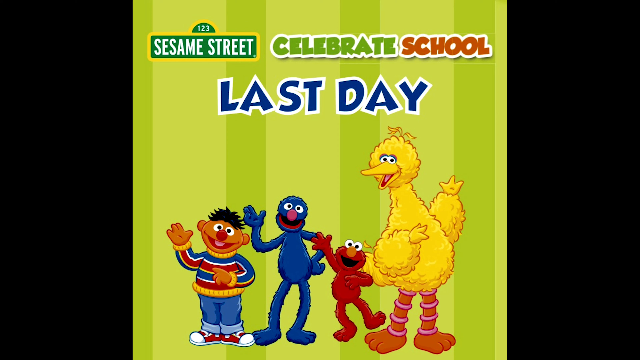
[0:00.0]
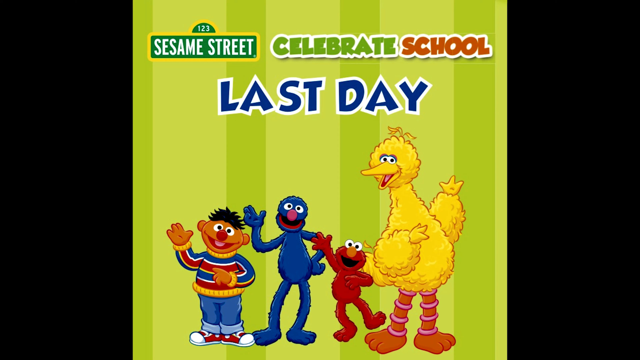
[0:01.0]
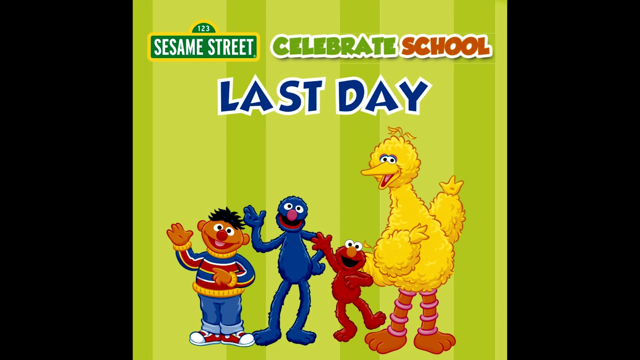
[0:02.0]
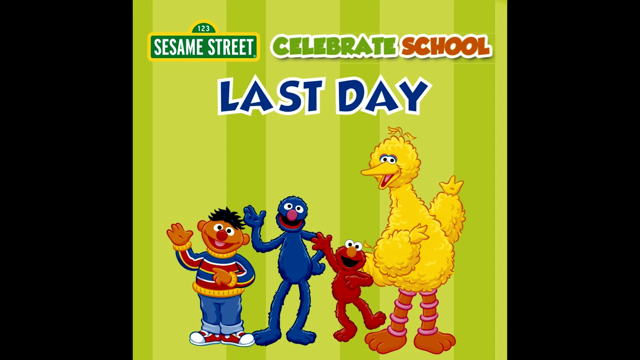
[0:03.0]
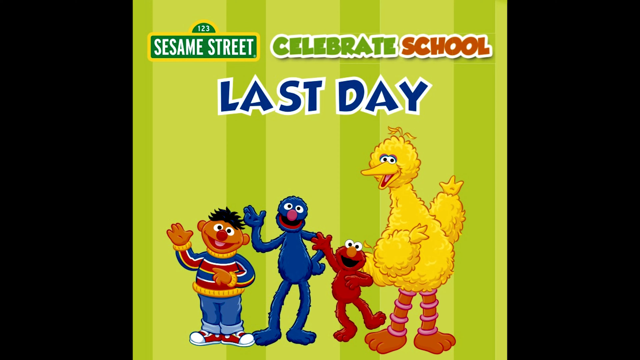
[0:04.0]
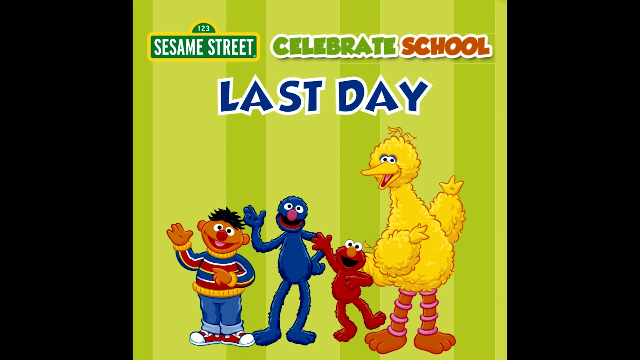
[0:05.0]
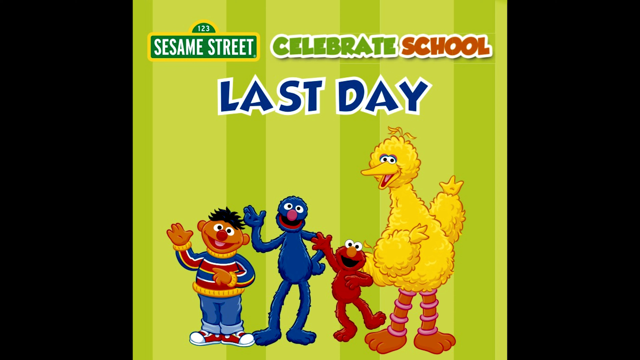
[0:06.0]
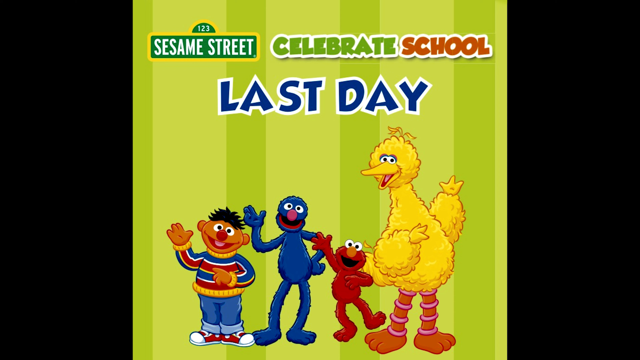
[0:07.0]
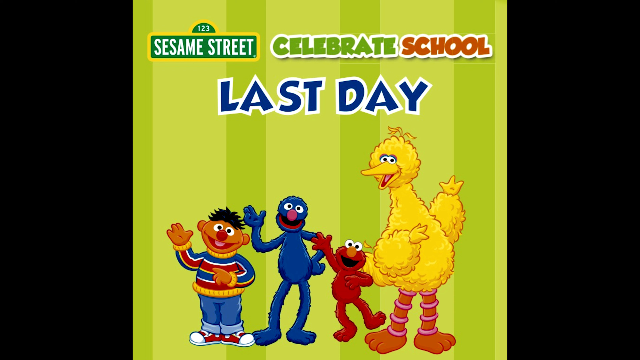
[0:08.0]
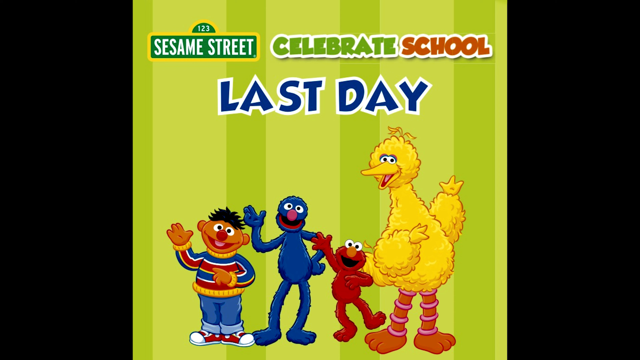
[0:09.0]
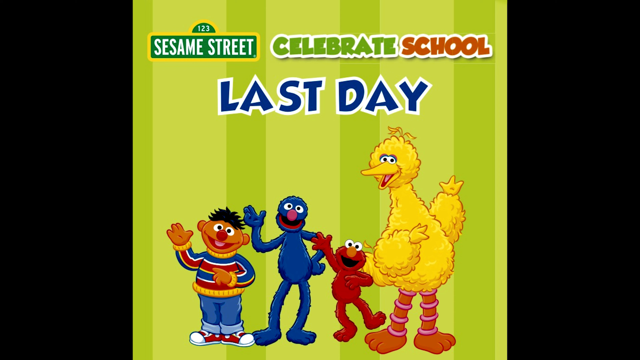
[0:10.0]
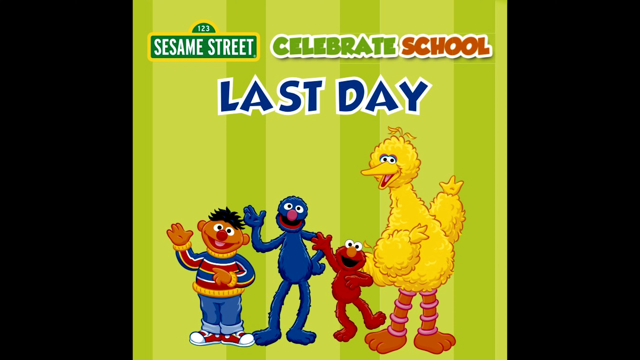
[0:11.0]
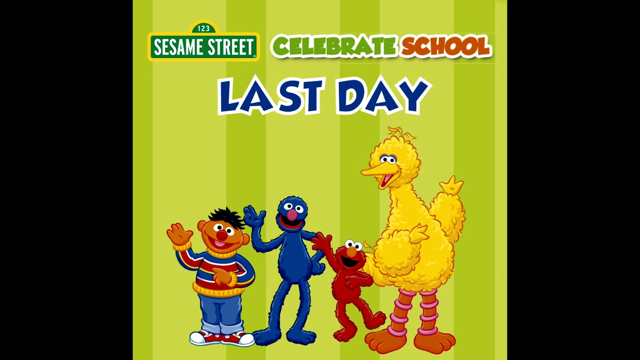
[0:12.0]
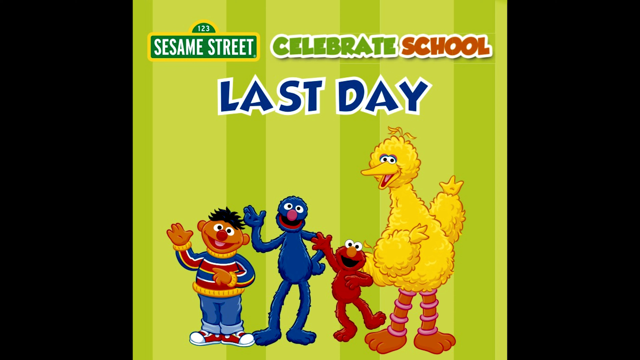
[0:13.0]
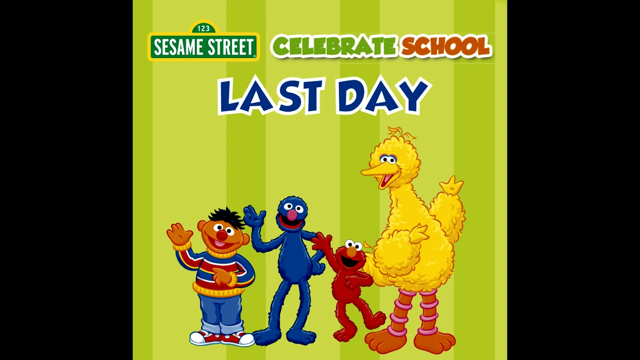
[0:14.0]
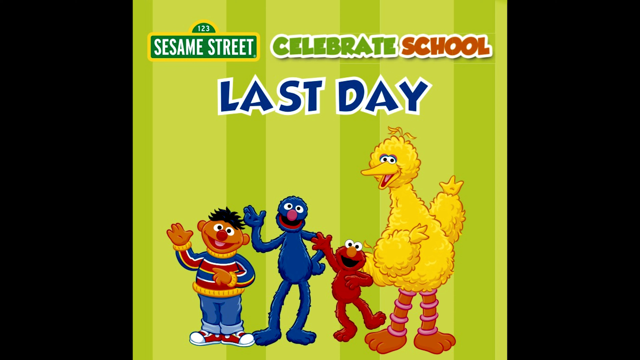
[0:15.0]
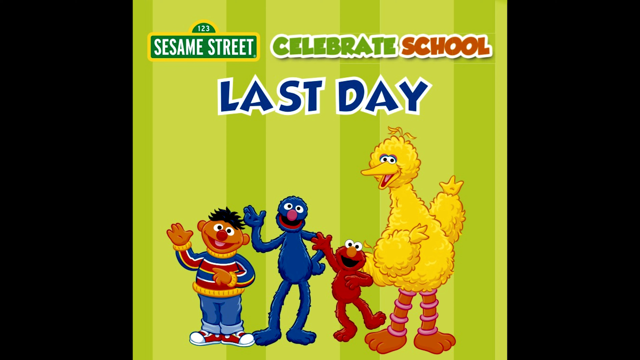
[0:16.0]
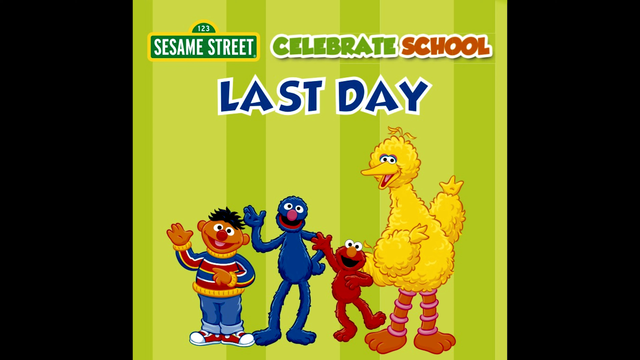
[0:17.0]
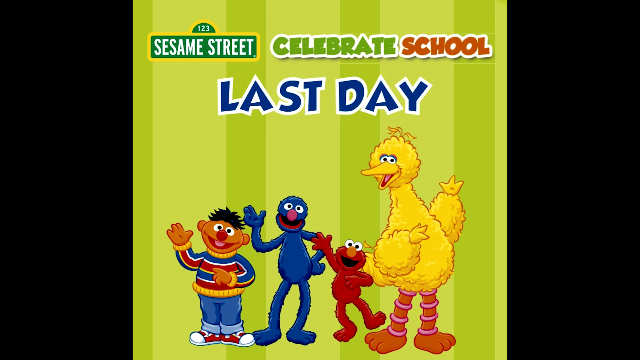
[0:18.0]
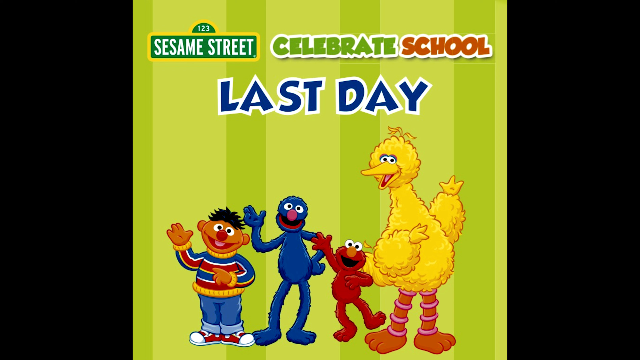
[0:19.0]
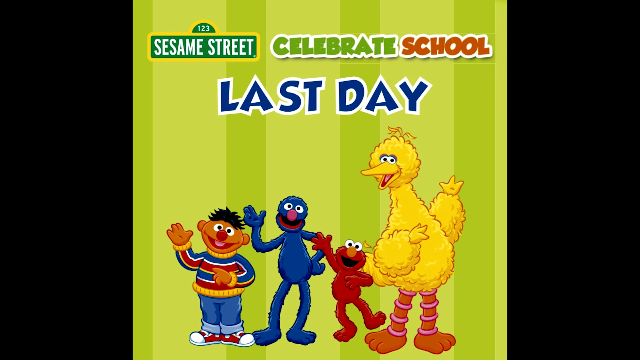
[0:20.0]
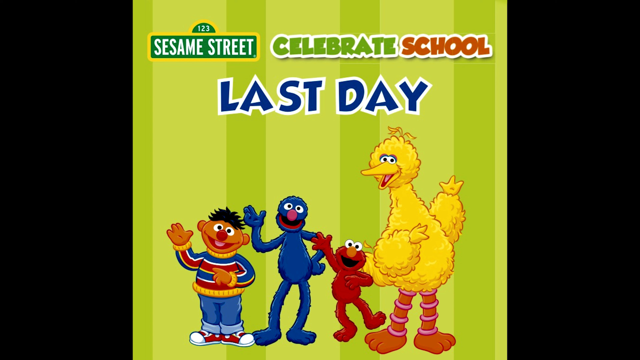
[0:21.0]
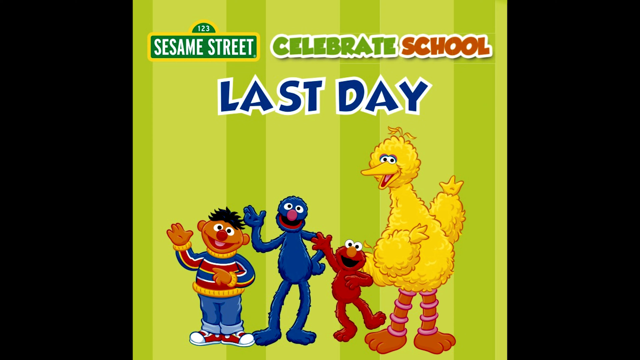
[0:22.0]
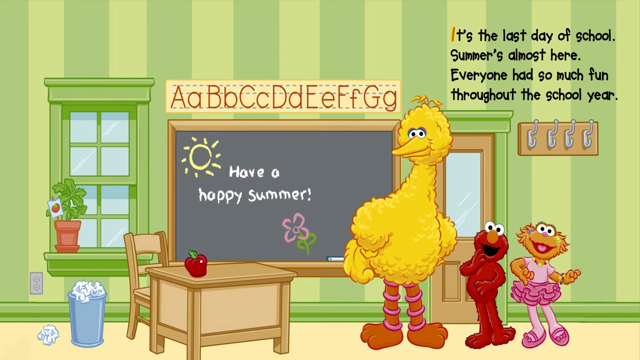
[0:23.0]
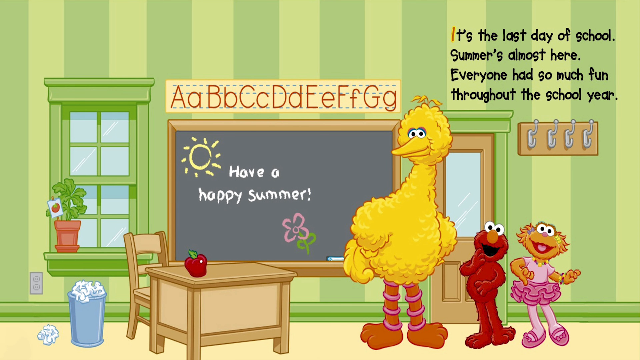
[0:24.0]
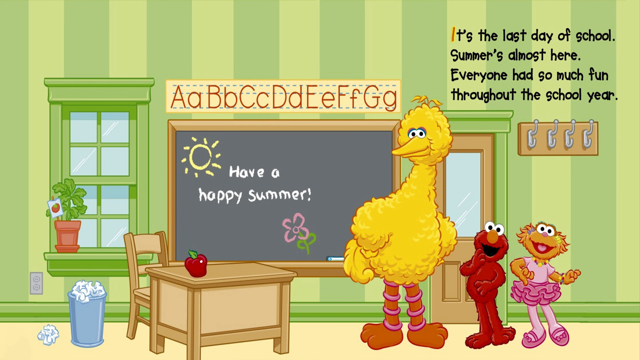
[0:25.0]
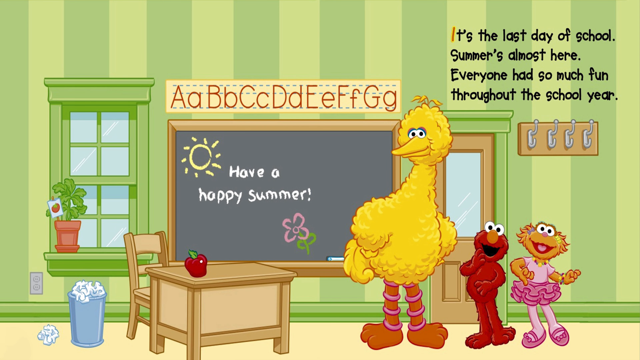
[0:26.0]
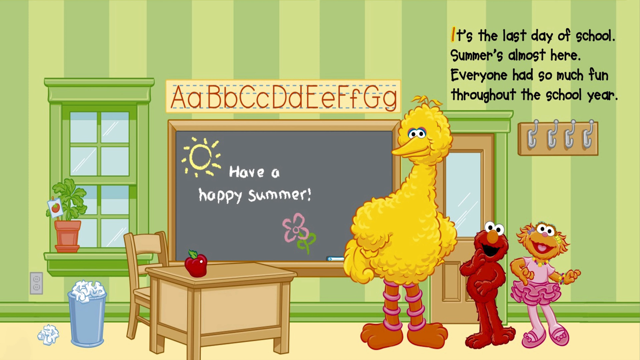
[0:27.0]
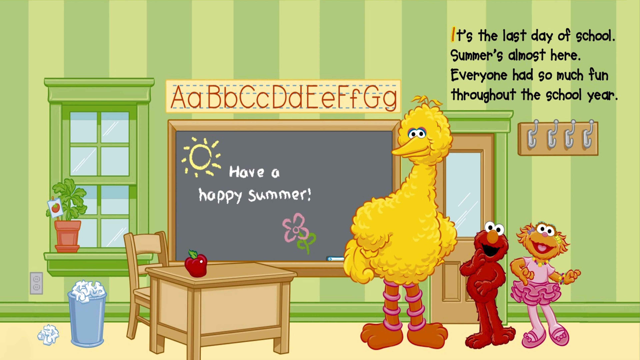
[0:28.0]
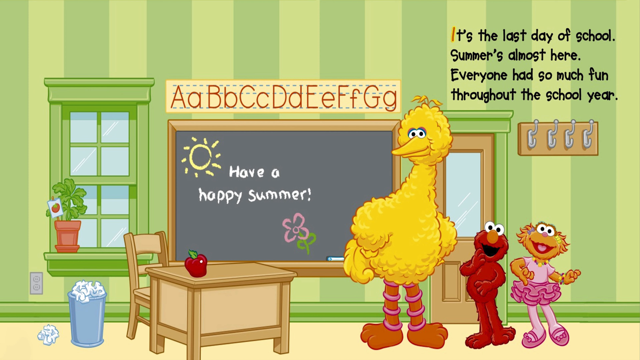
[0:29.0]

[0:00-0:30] Several different Sesame Street characters appear, such as Big Bird, Ernie, Grover, and Elmo. The video has a variety of colors, including yellow, various shades of green, red, blue, orange, white, and black. Words appear on screen, such as "SESAME STREET" in all caps and "CELEBRATE SCHOOL", also in all caps, with "LAST DAY" in all caps beneath it. The numbers 1, 2, 3 are also visible. The video seems to consist of multiple slides, each showing different Sesame Street characters. A following slide shows a black chalkboard and some writing on the wall; it passes very quickly before returning to the main opening slide with Ernie, Grover, Elmo, and Bert.